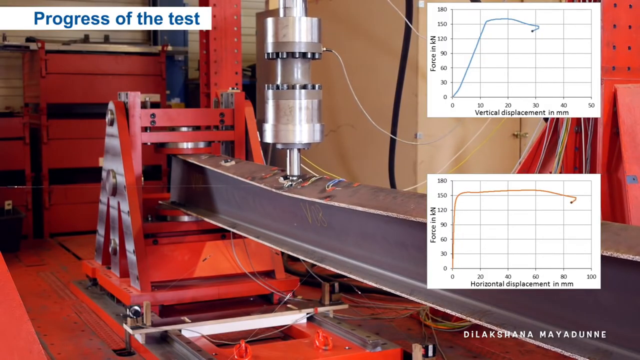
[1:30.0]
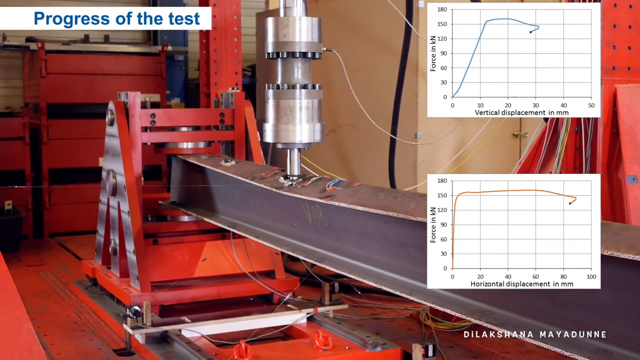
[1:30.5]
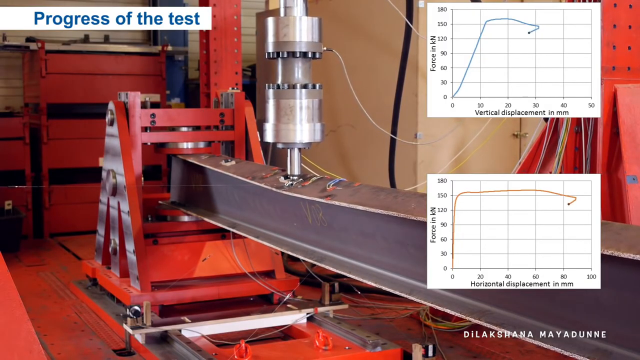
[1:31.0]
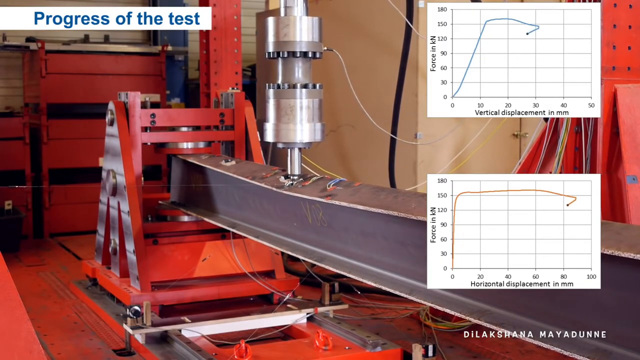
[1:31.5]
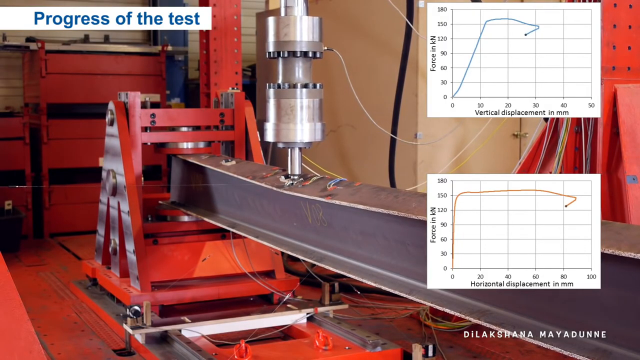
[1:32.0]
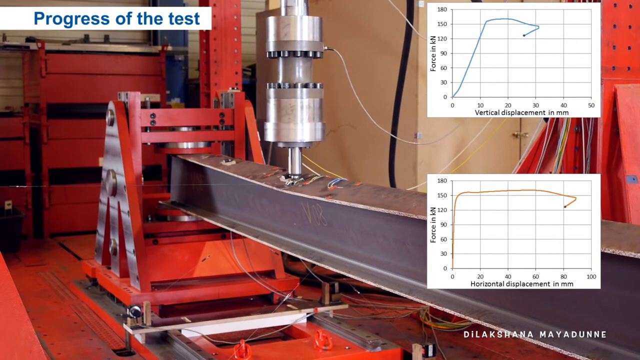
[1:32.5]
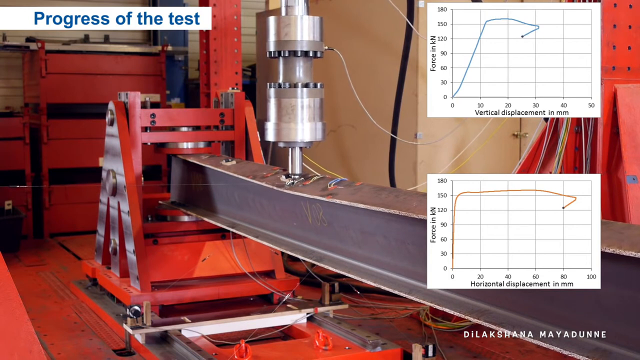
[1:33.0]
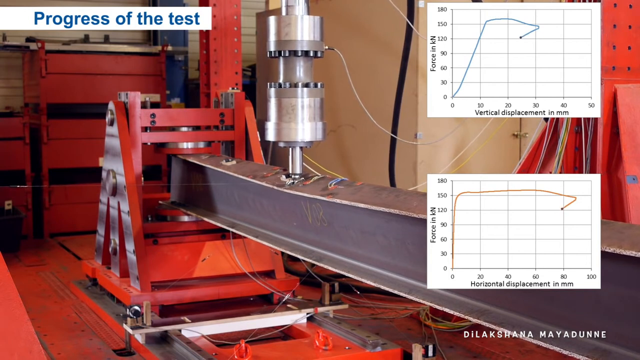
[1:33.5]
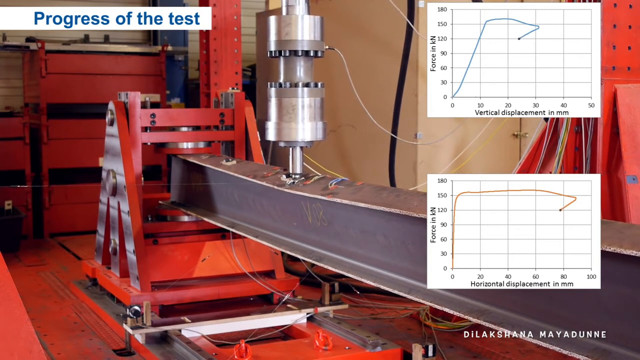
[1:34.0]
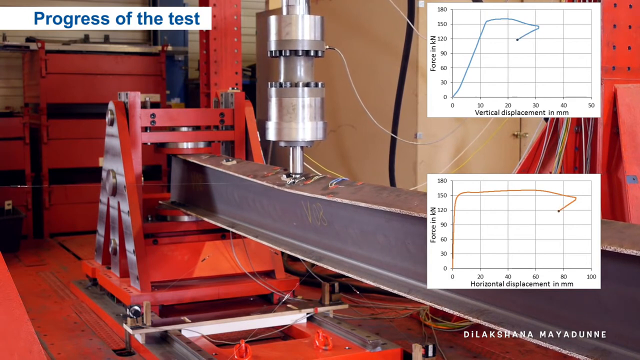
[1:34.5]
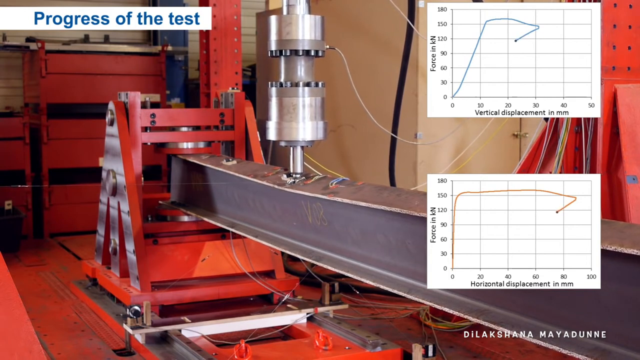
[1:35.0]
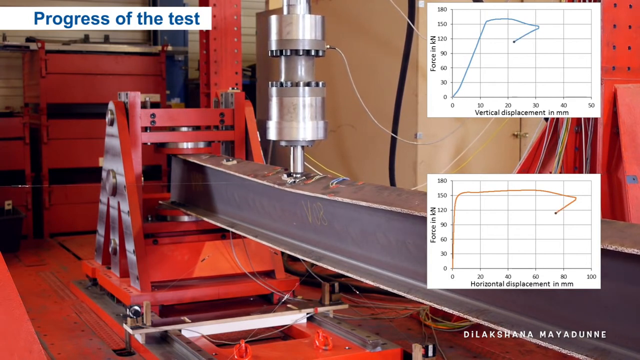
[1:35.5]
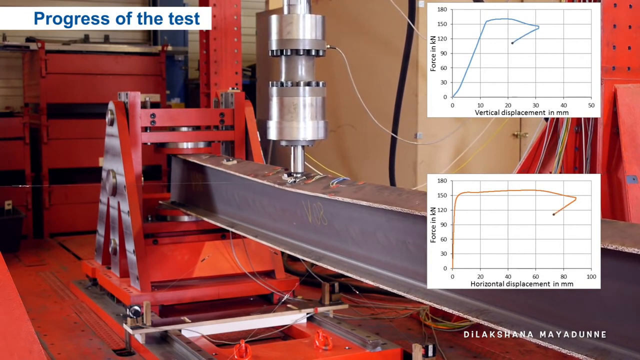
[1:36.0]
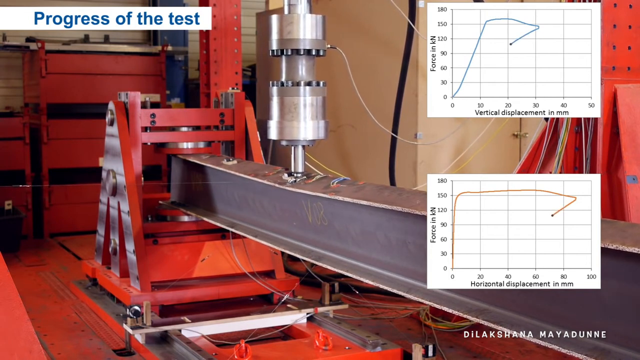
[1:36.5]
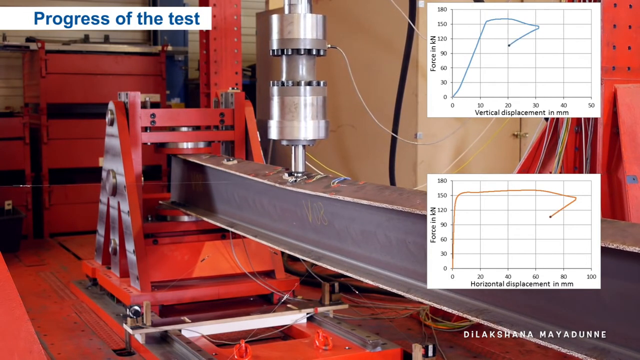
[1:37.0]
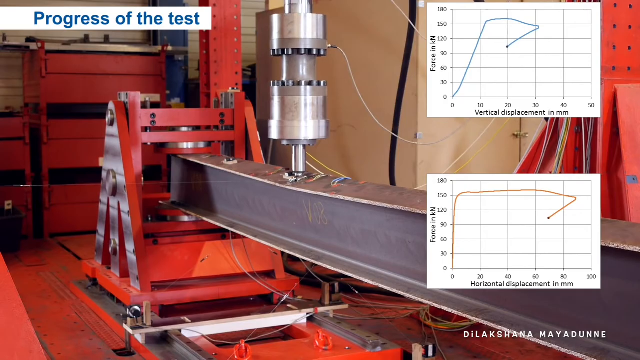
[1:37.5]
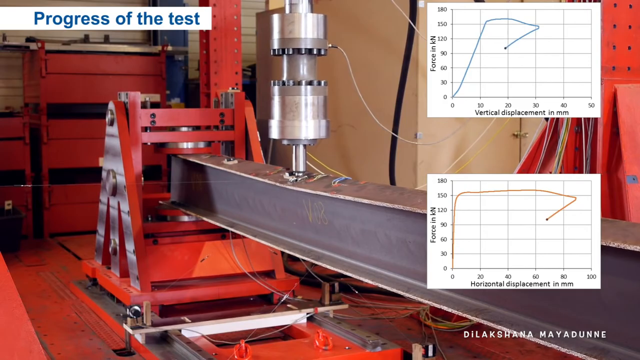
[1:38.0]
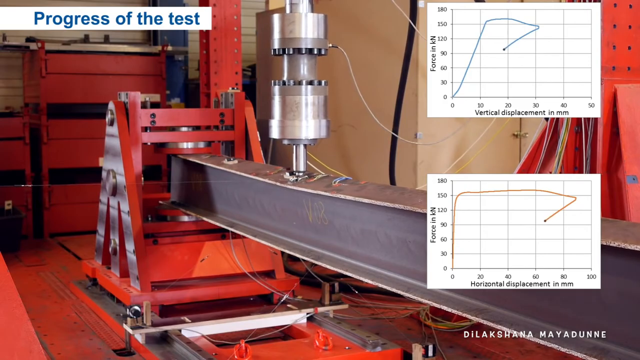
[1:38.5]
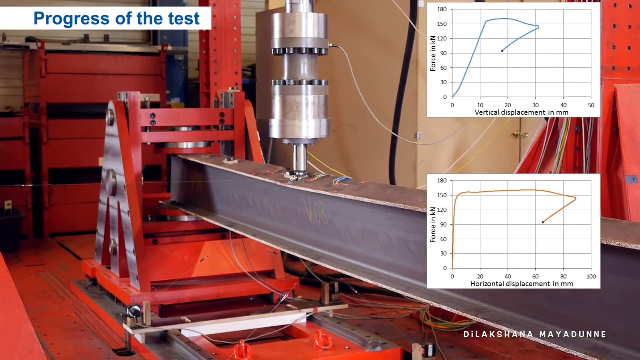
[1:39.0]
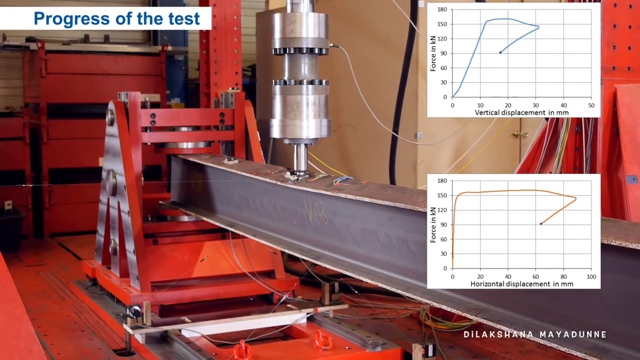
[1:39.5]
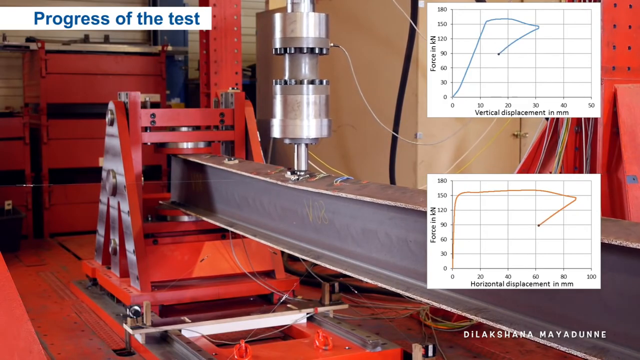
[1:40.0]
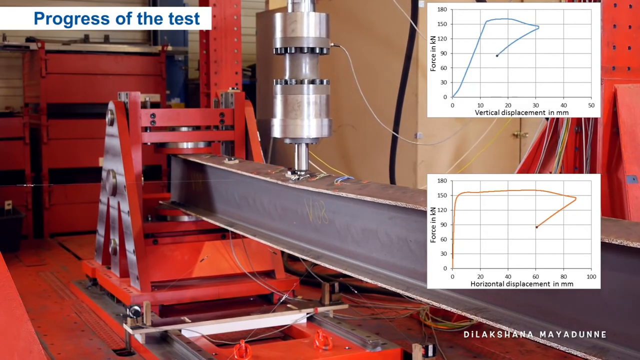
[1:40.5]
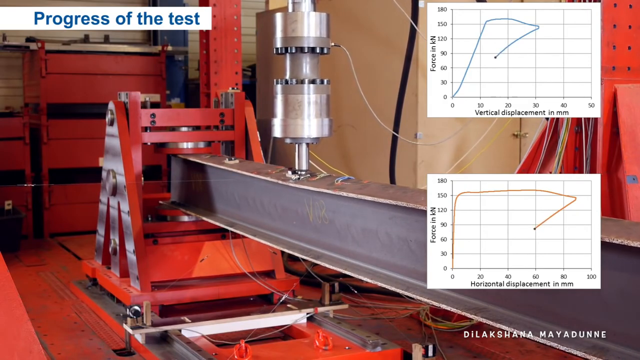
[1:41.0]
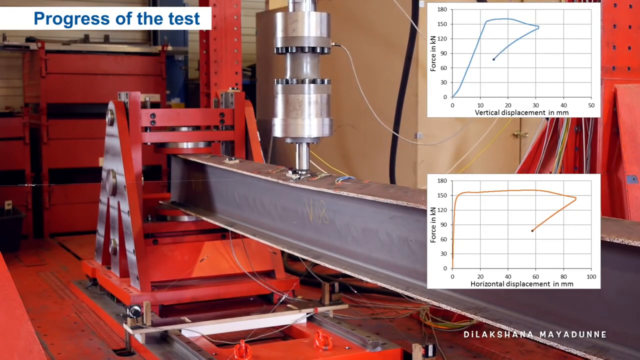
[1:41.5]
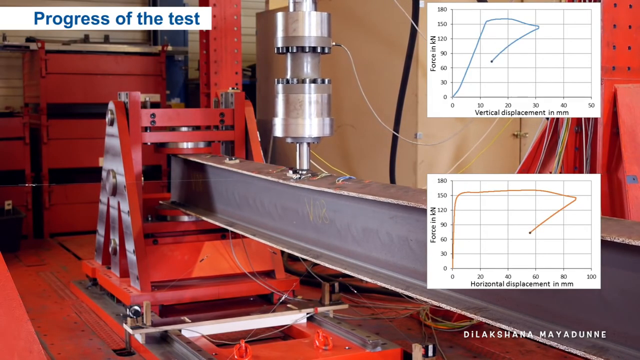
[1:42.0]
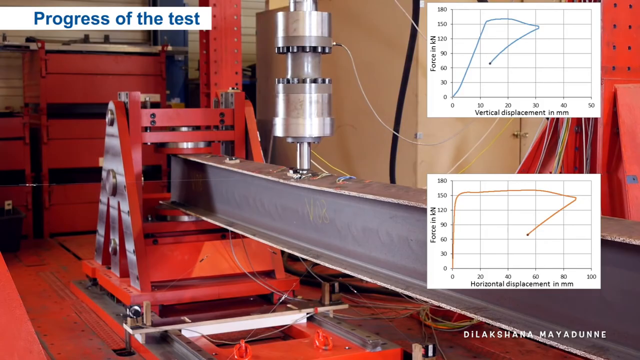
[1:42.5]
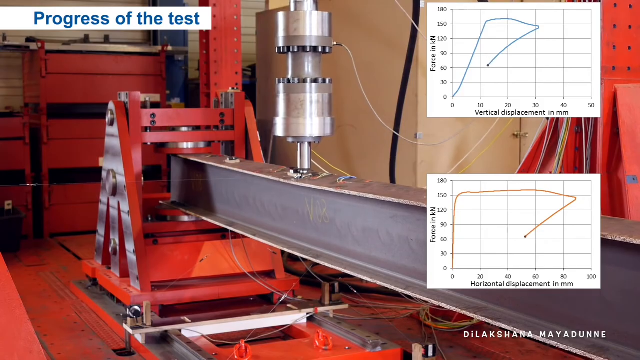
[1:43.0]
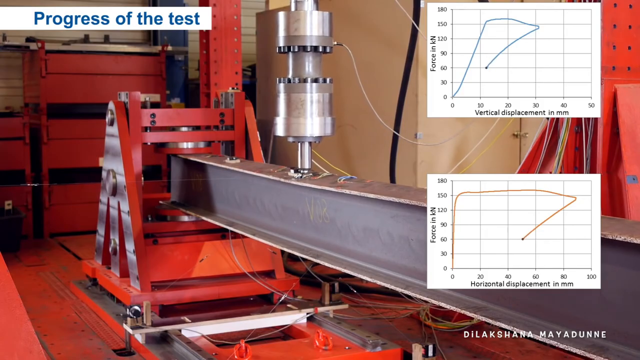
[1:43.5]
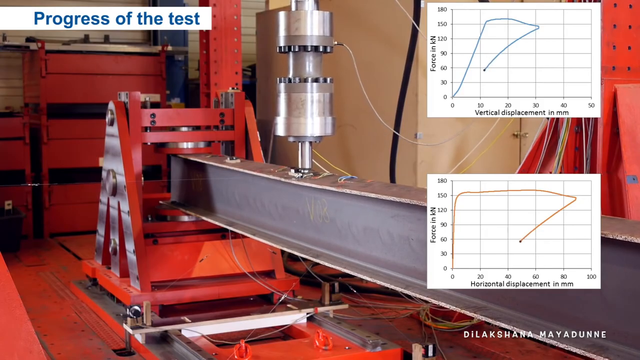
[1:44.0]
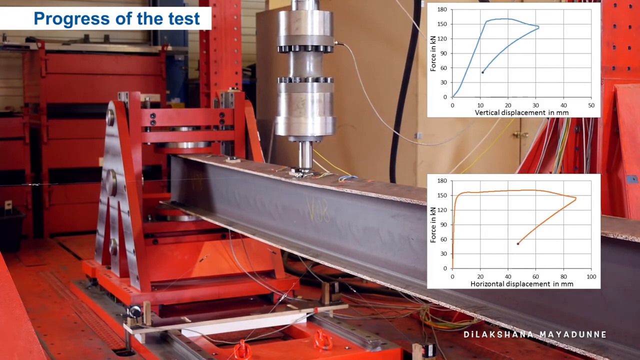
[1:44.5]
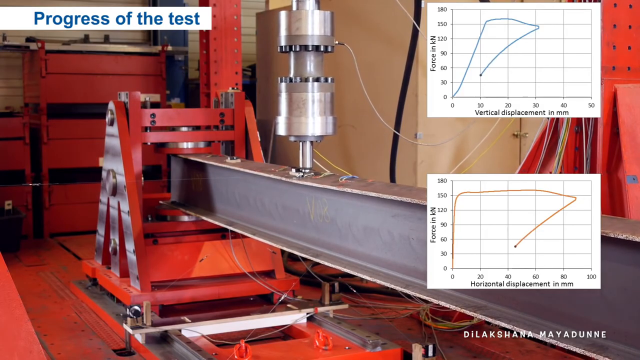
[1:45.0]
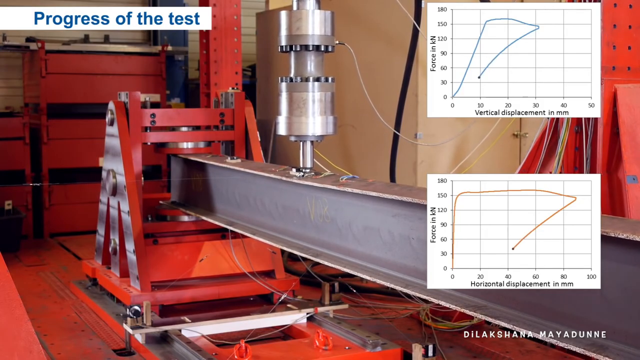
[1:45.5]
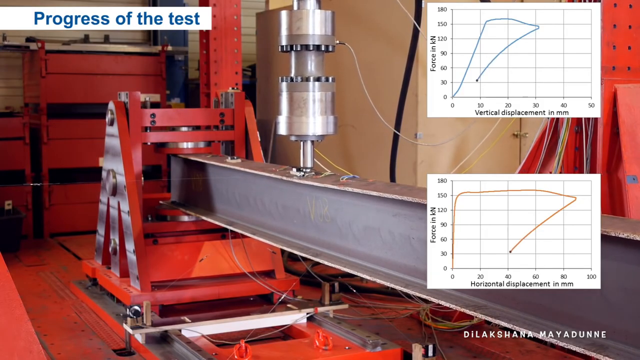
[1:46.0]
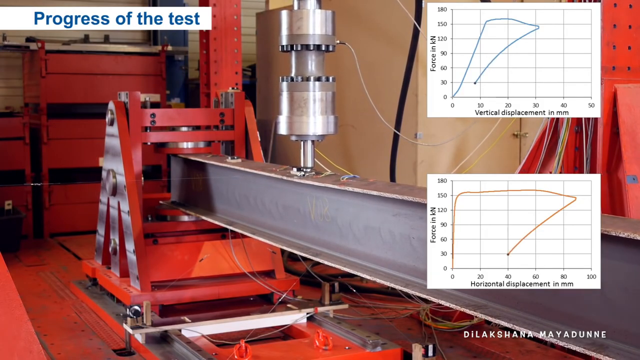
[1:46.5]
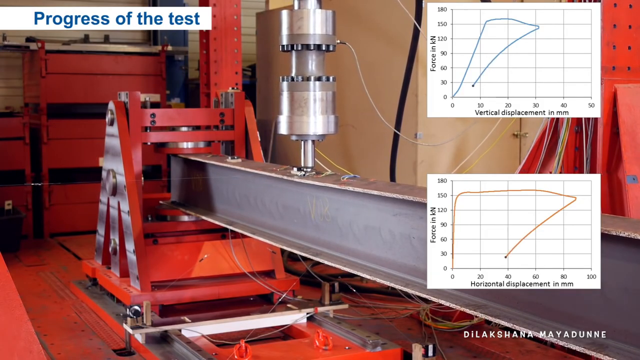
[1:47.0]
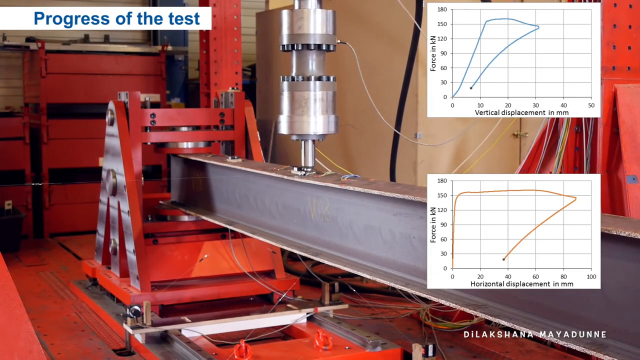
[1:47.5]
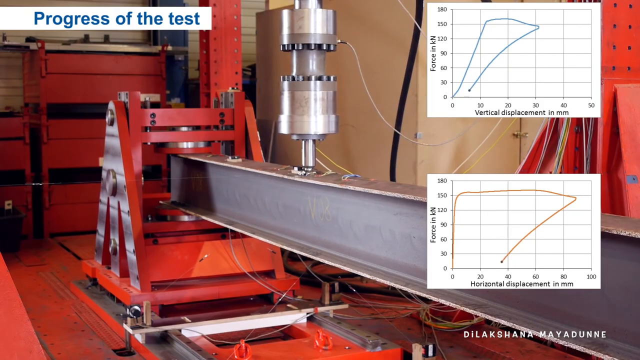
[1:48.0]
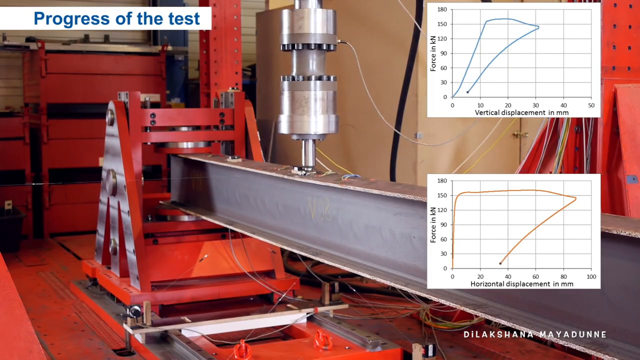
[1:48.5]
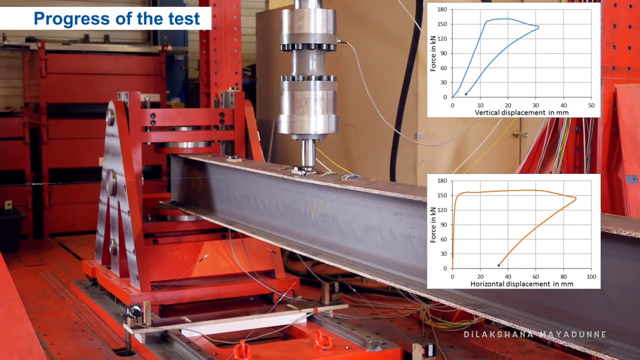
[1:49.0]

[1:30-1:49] Many red objects are scattered throughout the scene; some are machinery, some are cabinets, and others are various objects typical of a laboratory. Many wires are scattered throughout different areas, and a lot of them are connected to objects in the scene. The scene has a slightly dark tinge, with a slight shadow. The graphs on the right side of the screen show horizontal and vertical displacement on the x-axis and force in kilonewtons on the y-axis.